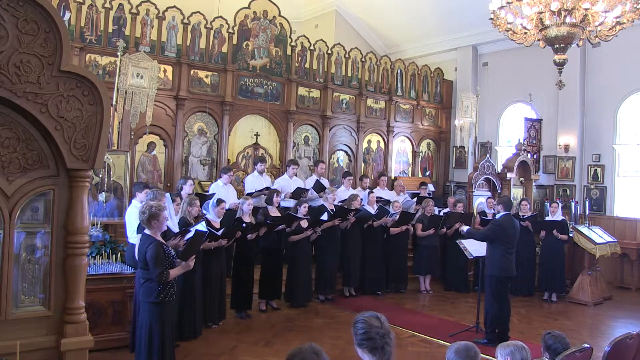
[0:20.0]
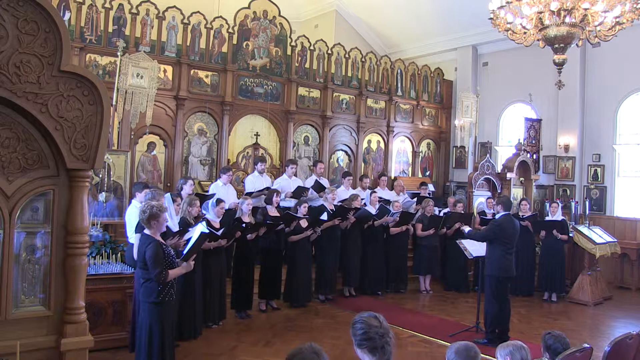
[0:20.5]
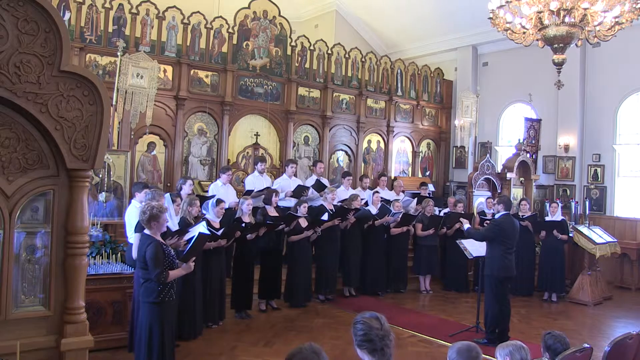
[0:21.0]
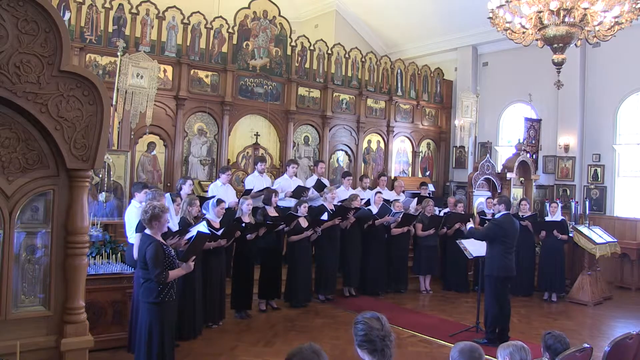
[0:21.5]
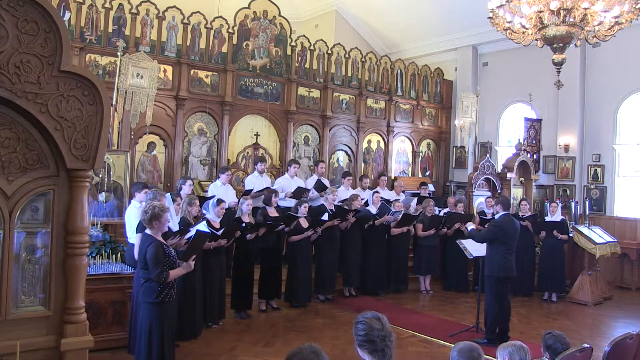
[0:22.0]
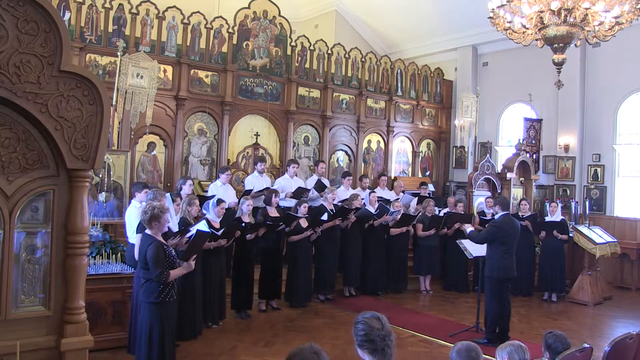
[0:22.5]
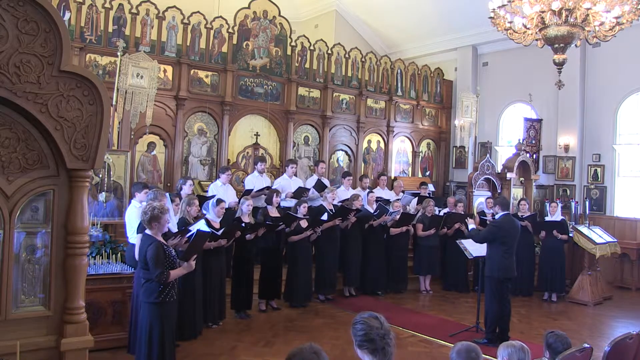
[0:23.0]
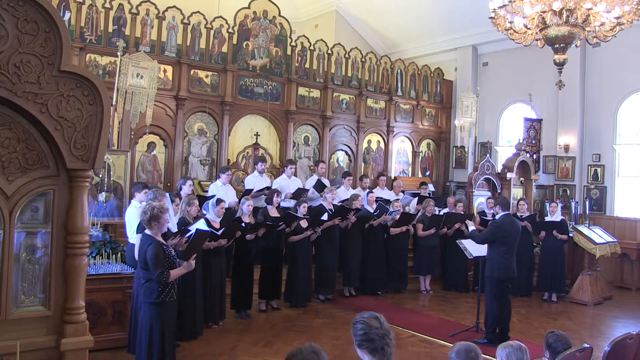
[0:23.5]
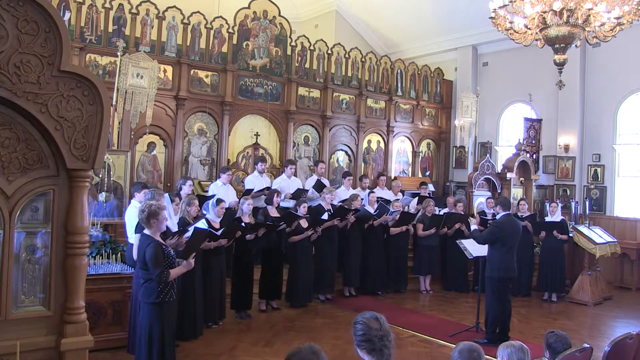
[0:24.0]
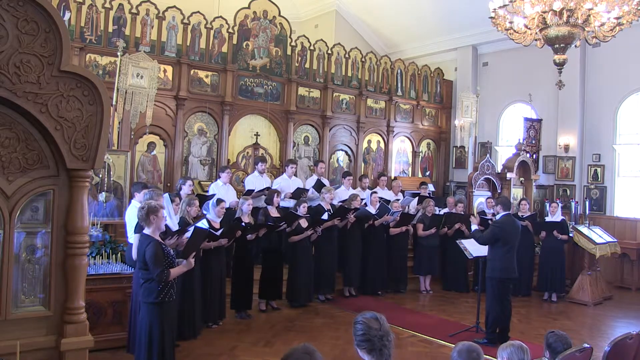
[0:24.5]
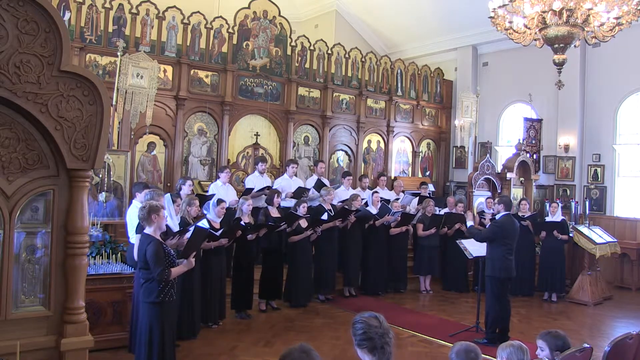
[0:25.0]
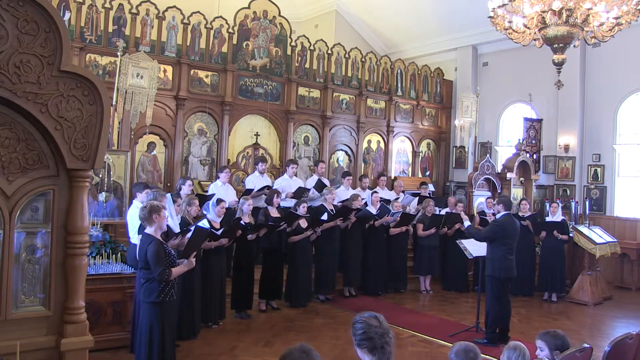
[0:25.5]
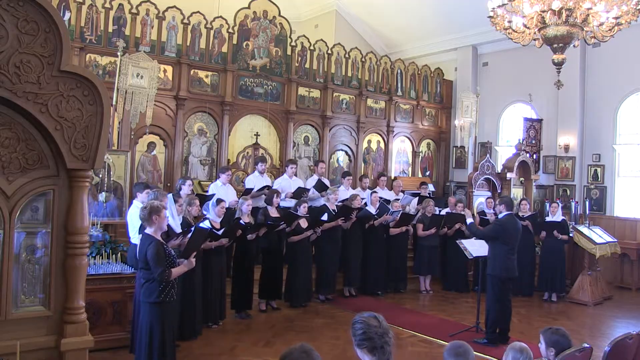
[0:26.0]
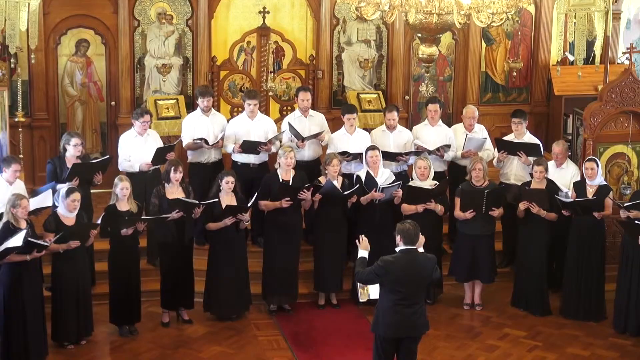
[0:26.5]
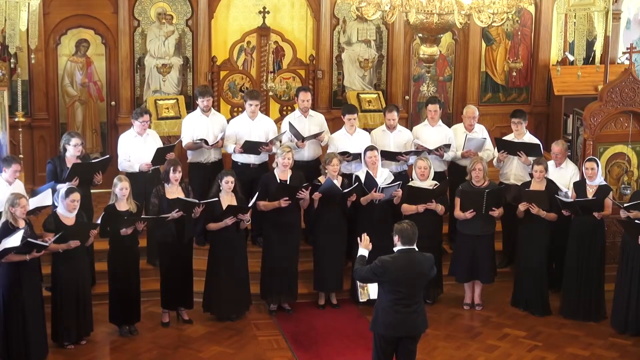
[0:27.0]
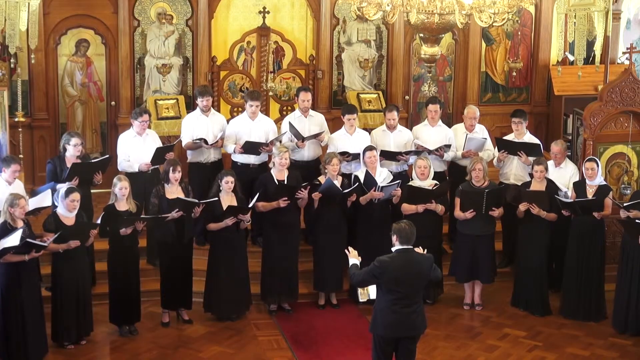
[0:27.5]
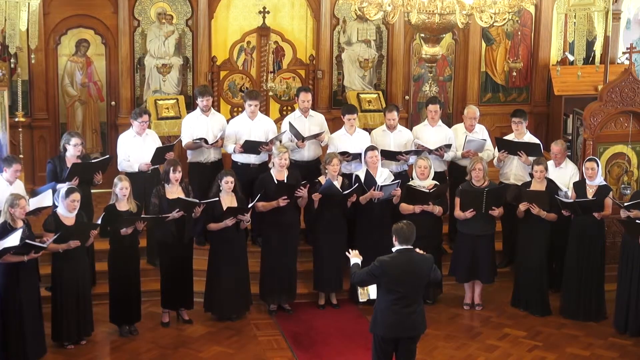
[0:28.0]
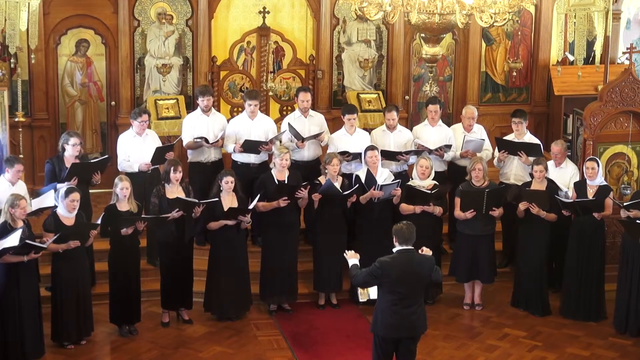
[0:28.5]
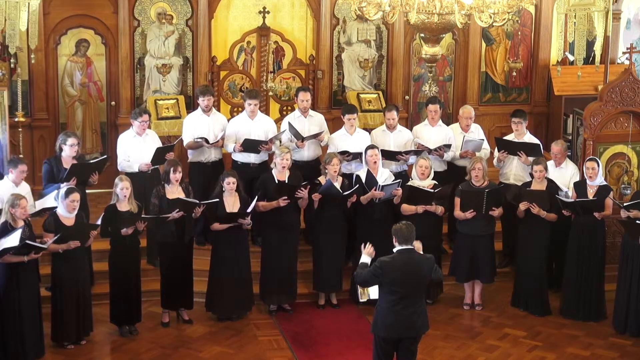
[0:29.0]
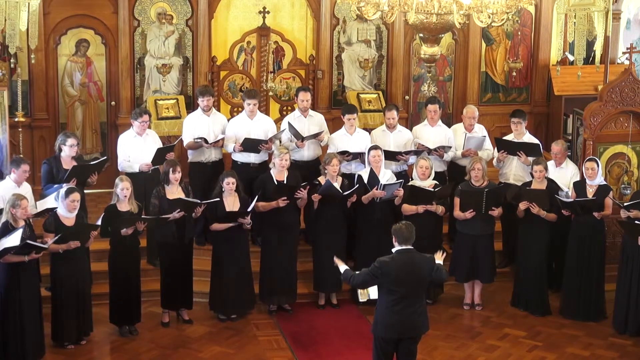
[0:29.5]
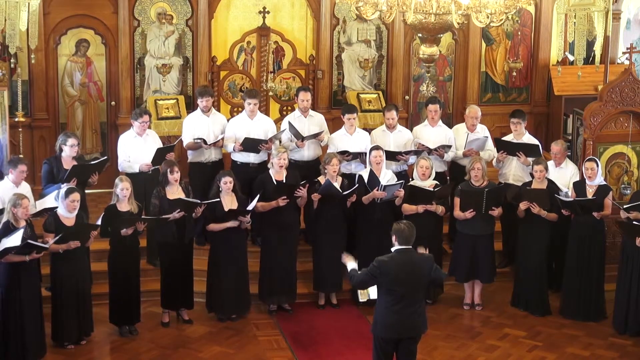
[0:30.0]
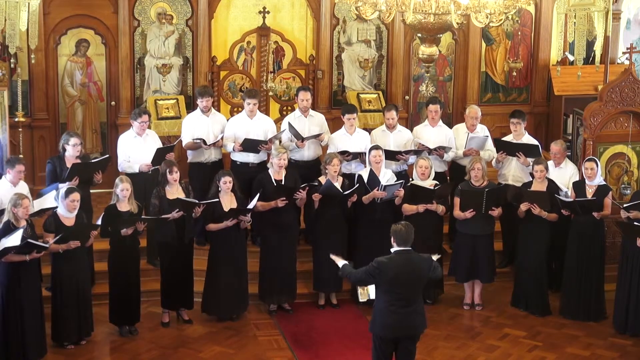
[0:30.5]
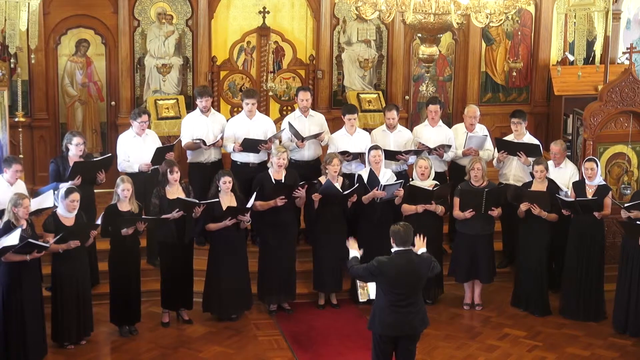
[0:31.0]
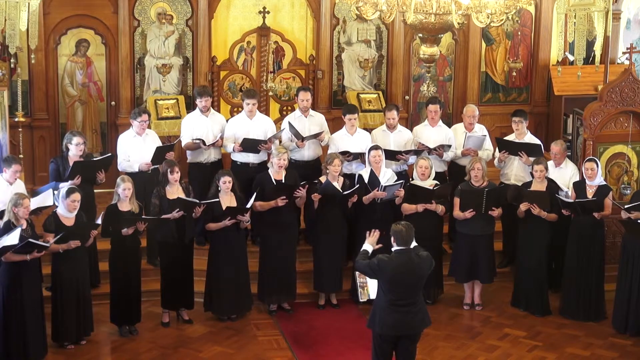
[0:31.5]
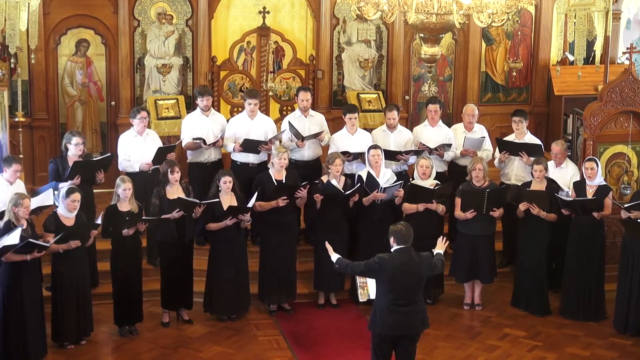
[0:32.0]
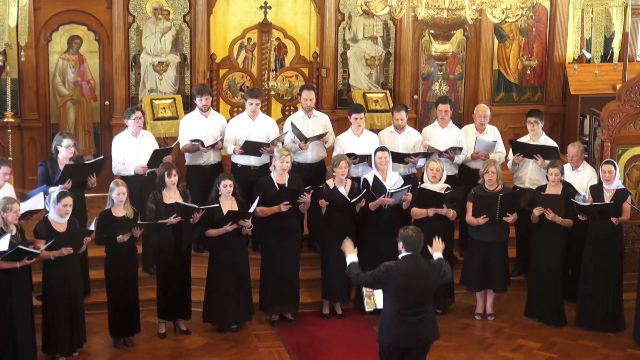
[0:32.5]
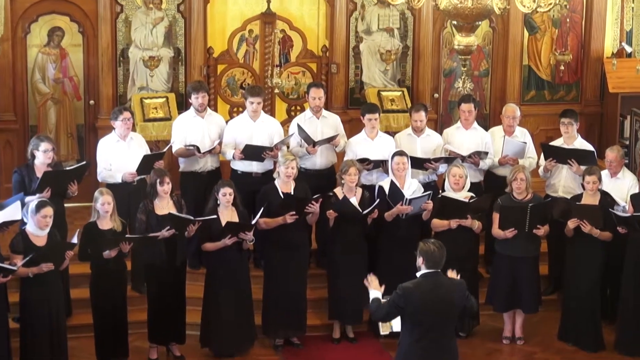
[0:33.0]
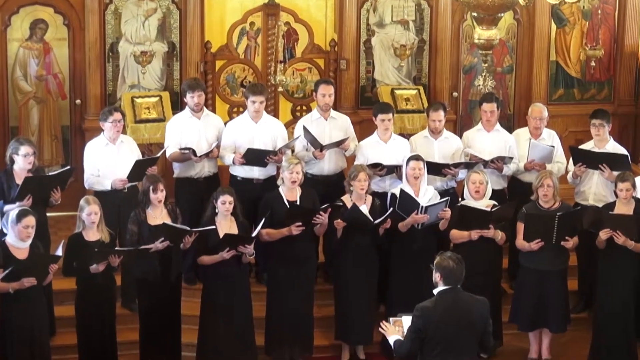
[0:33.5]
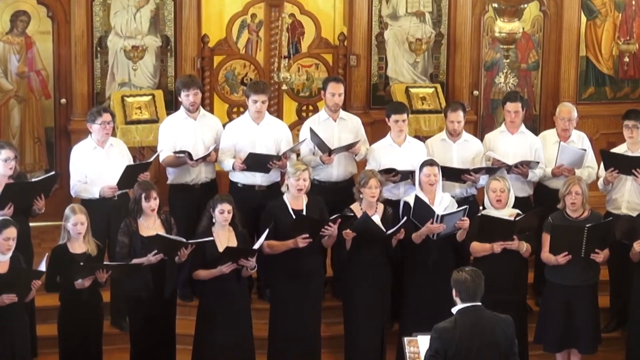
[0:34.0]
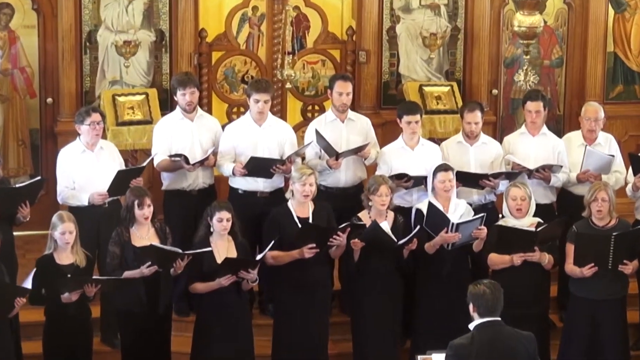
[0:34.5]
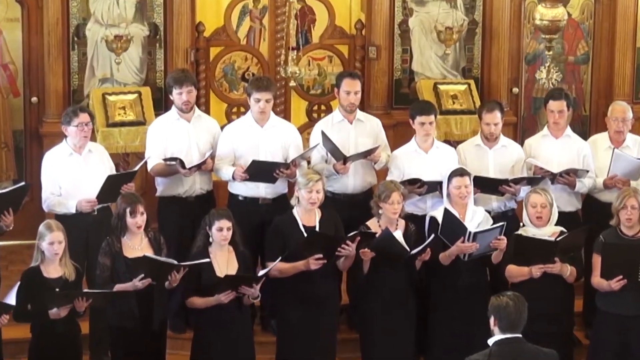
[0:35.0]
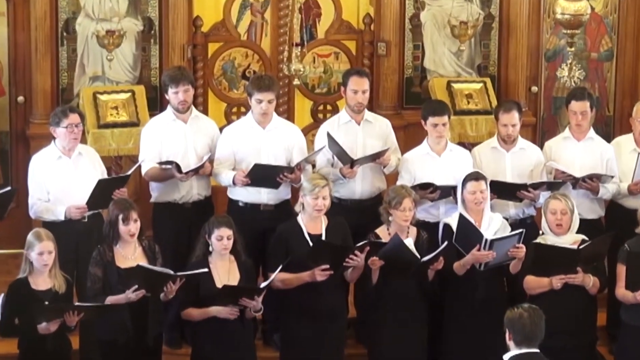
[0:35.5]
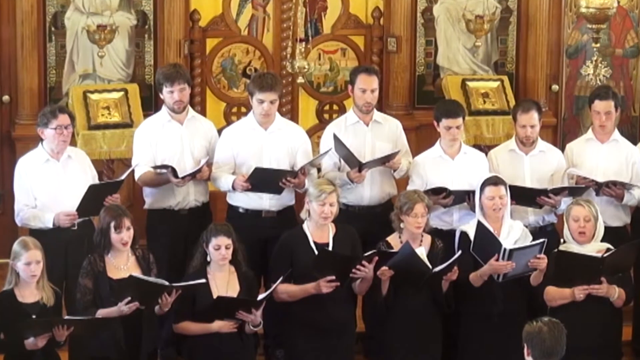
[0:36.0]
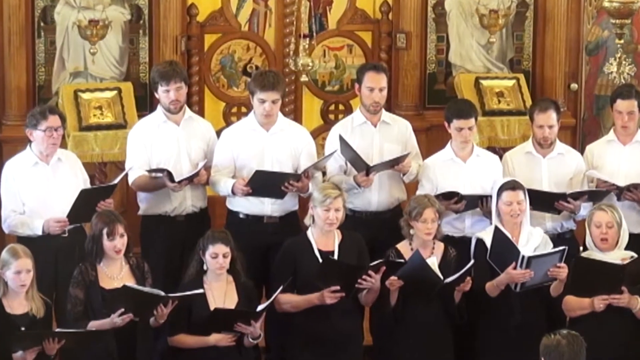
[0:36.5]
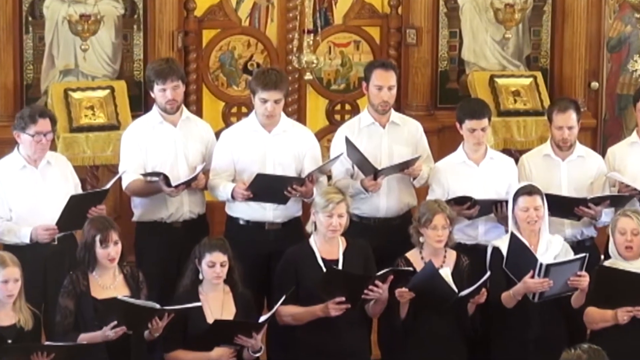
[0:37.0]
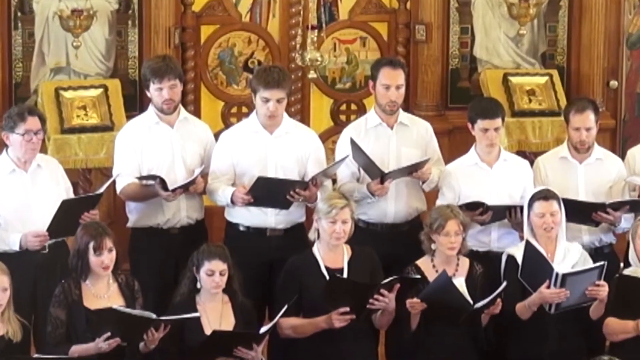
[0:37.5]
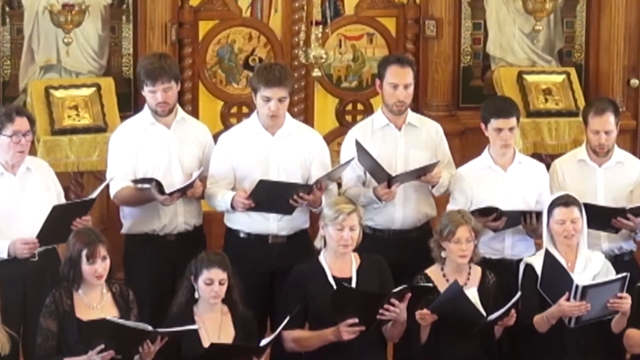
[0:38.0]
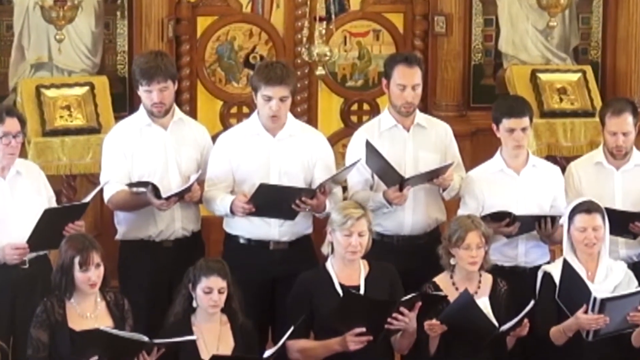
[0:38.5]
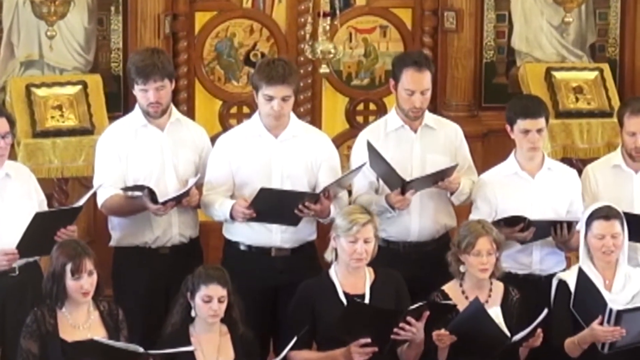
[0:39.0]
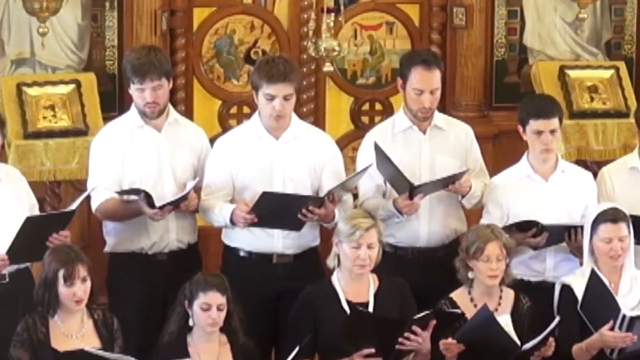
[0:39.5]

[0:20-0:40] The choir continues to sing while the conductor, a man dressed all in black, moves his hands to control the flow of the music, continuing to face the choir. The scene shifts to a more forward view of the choir, with the conductor's back toward the center at the bottom of the frame. The women are in the front row and the men in the back row. Everyone holds big black books or pamphlets and looks down at them while singing. The camera then zooms in on three men singing the song with the rest of the group, with the religious figure decorations still visible in the background.